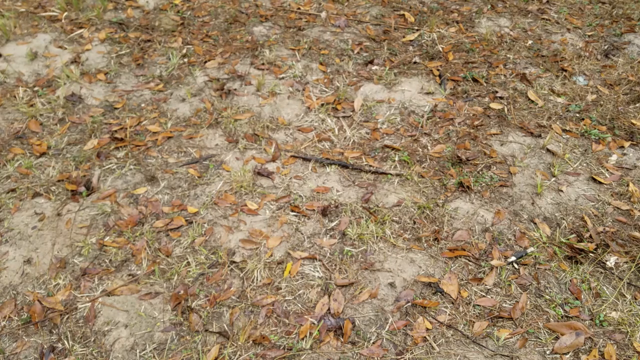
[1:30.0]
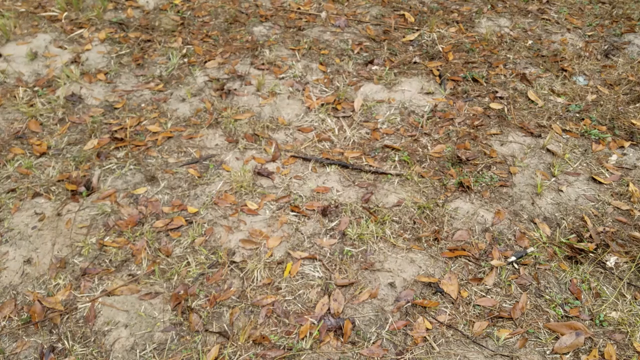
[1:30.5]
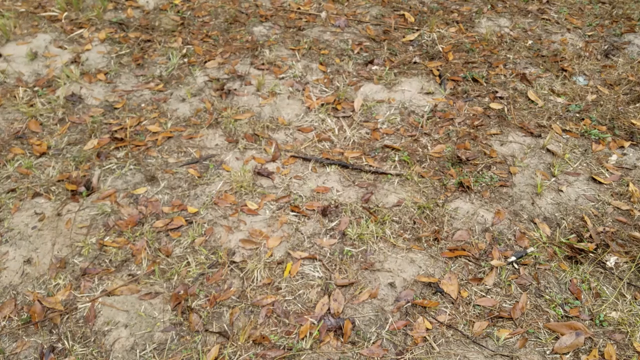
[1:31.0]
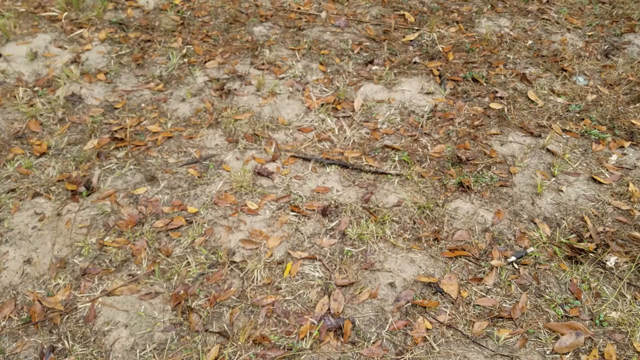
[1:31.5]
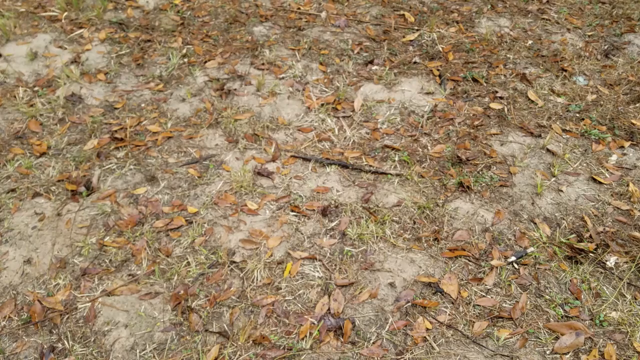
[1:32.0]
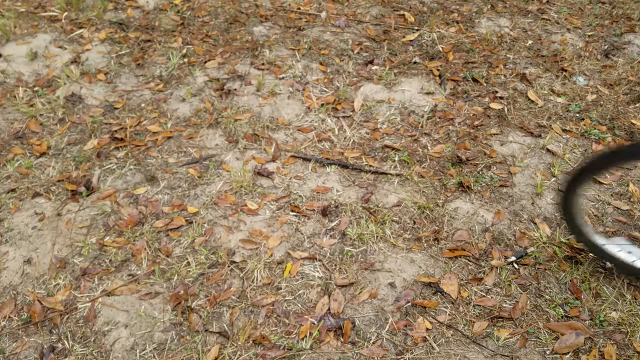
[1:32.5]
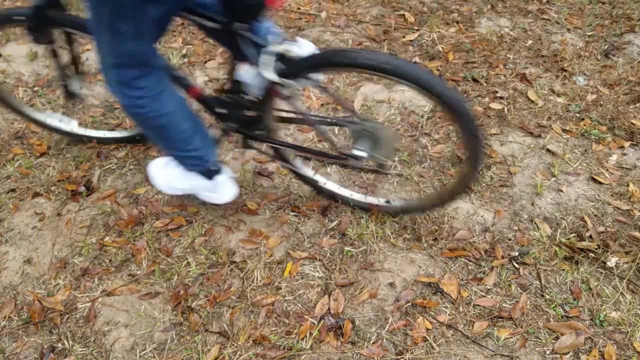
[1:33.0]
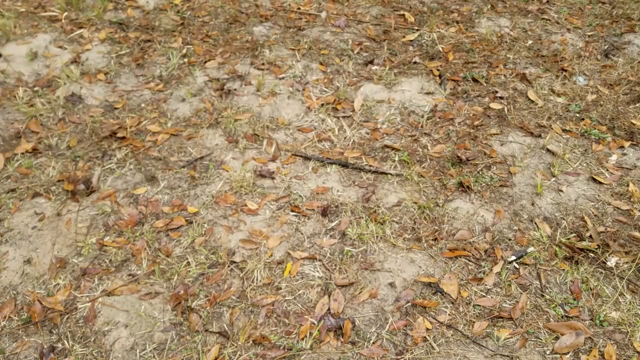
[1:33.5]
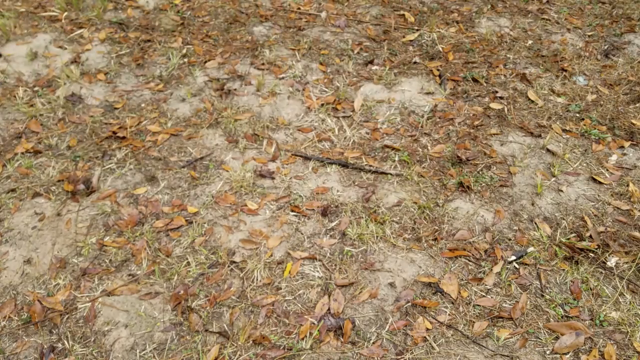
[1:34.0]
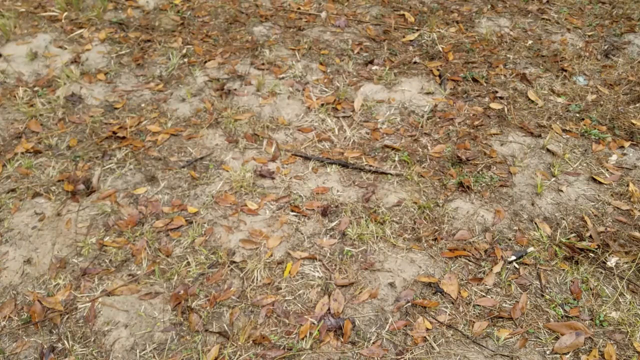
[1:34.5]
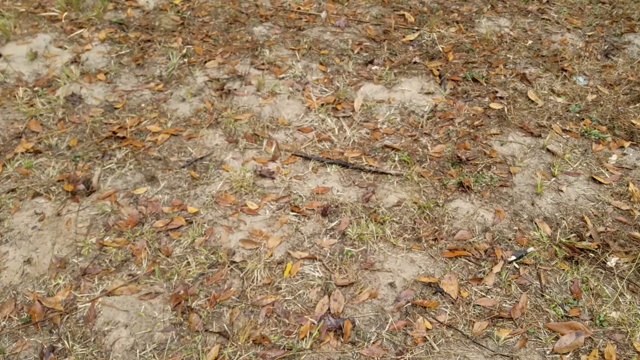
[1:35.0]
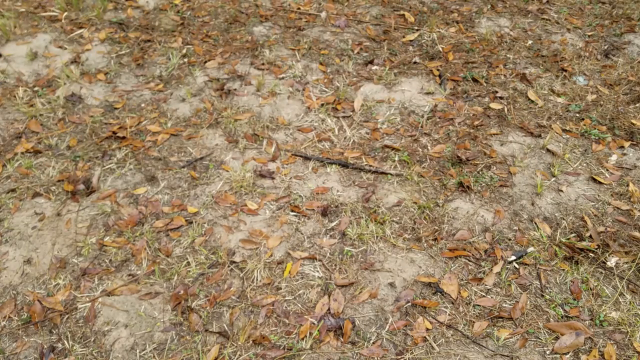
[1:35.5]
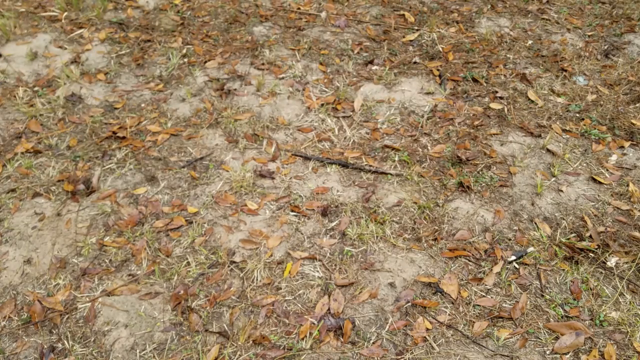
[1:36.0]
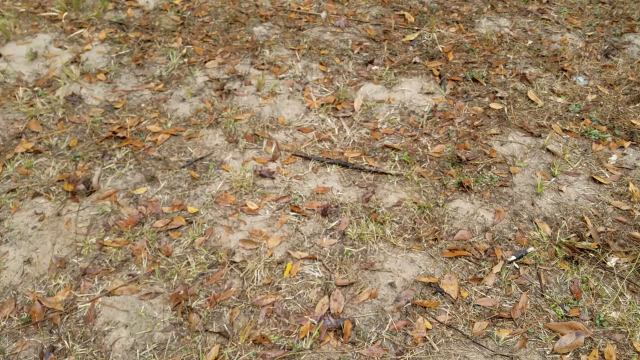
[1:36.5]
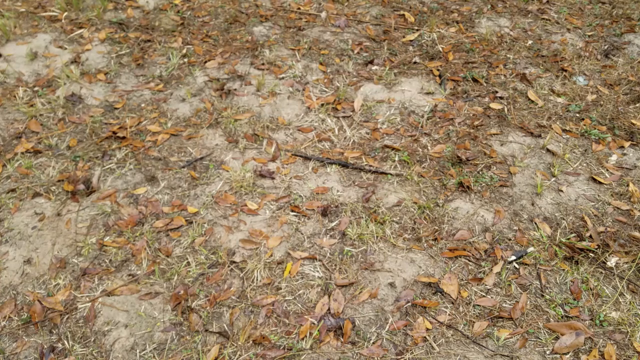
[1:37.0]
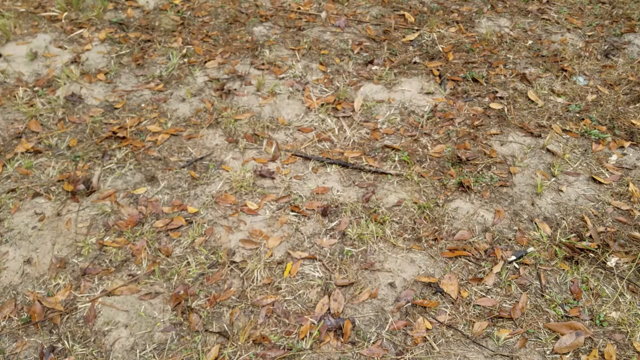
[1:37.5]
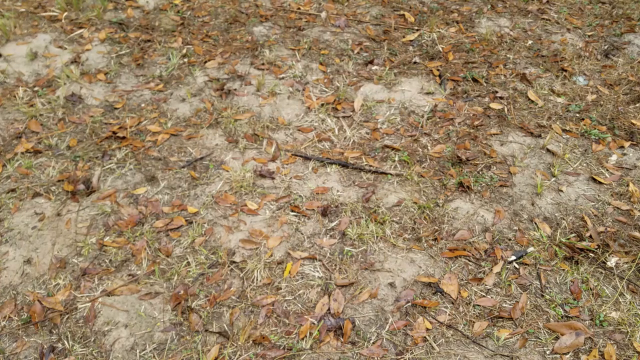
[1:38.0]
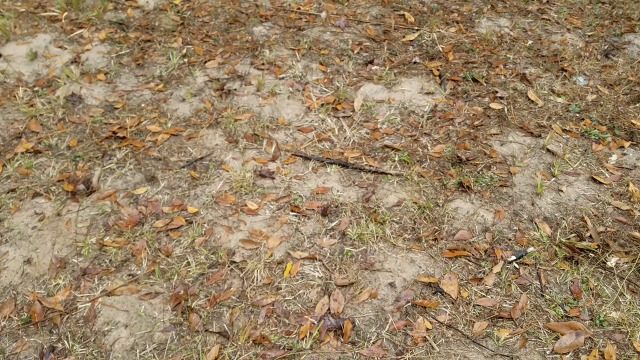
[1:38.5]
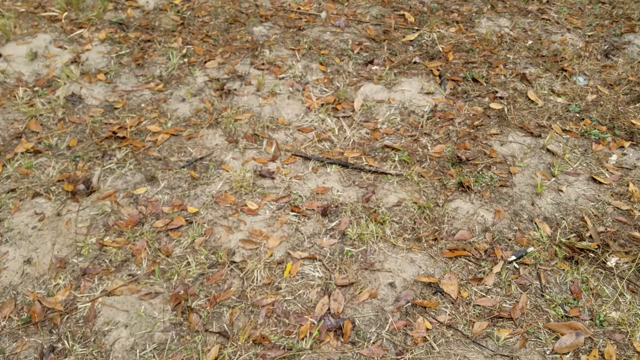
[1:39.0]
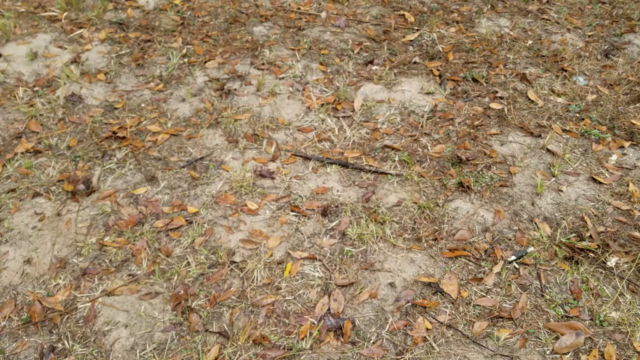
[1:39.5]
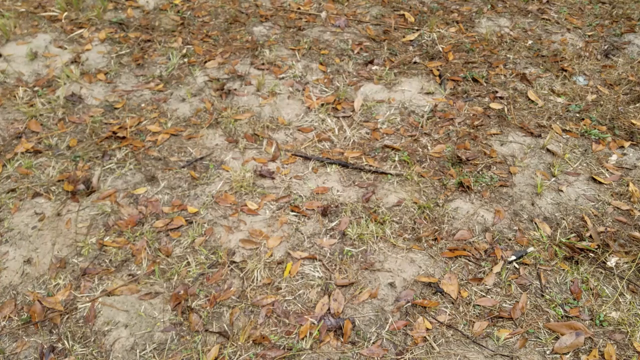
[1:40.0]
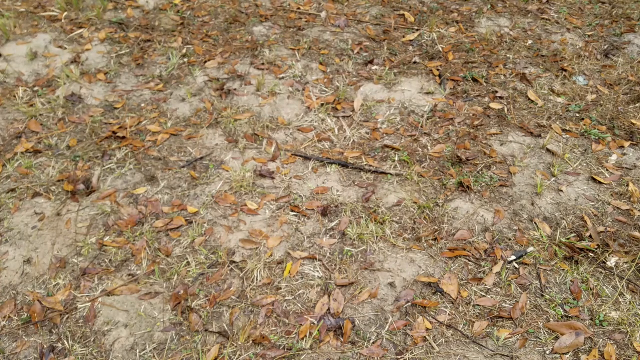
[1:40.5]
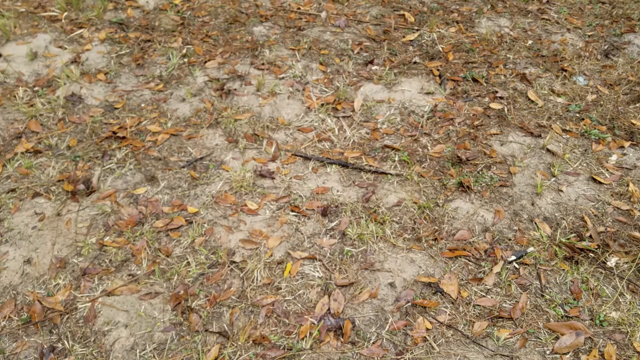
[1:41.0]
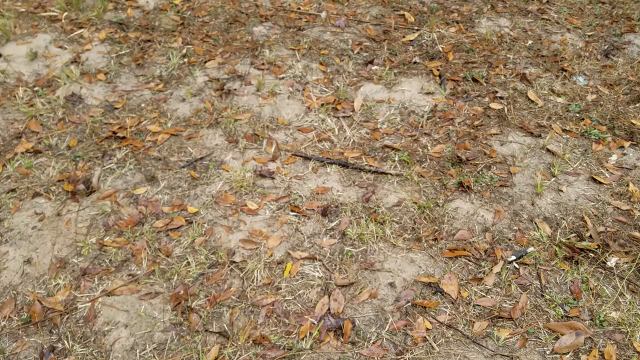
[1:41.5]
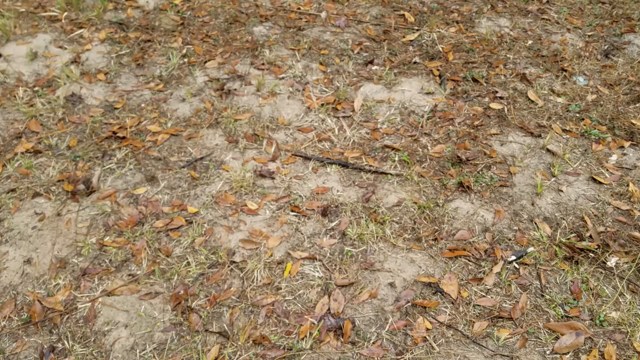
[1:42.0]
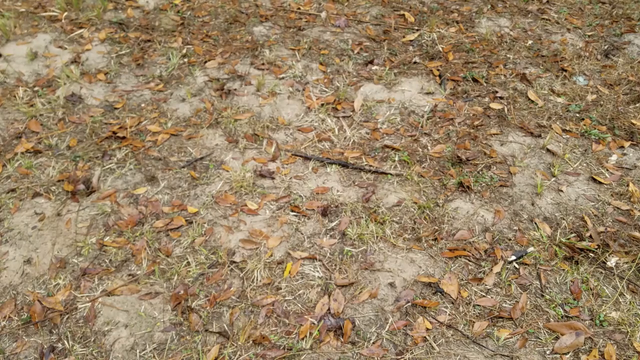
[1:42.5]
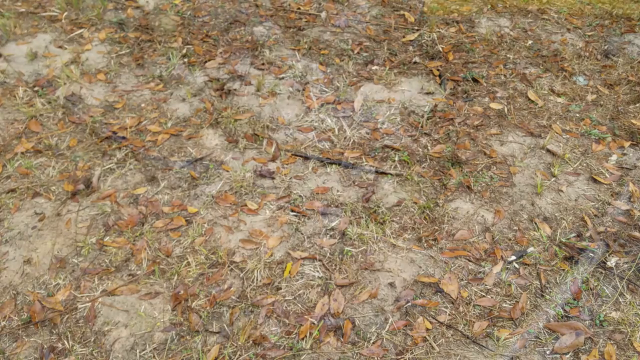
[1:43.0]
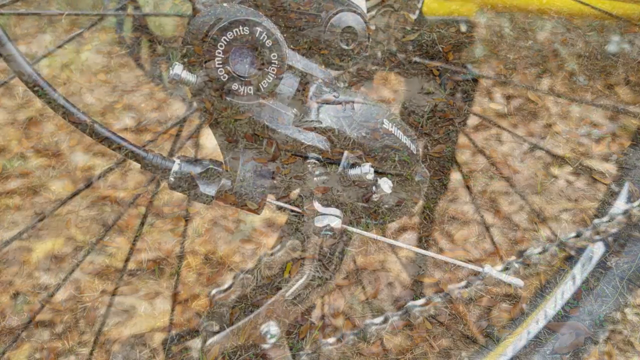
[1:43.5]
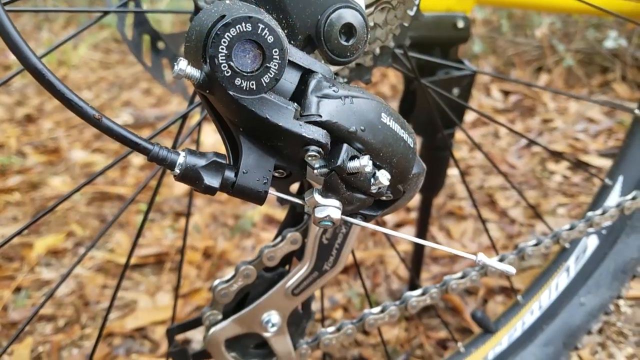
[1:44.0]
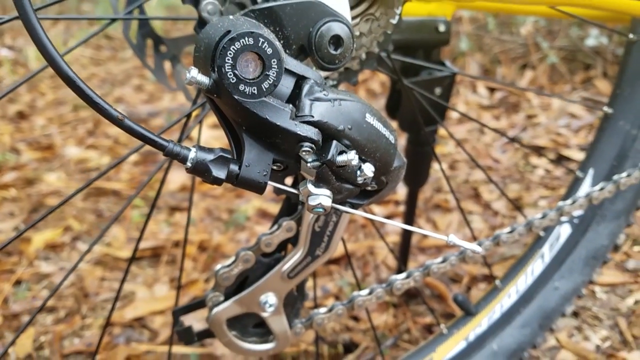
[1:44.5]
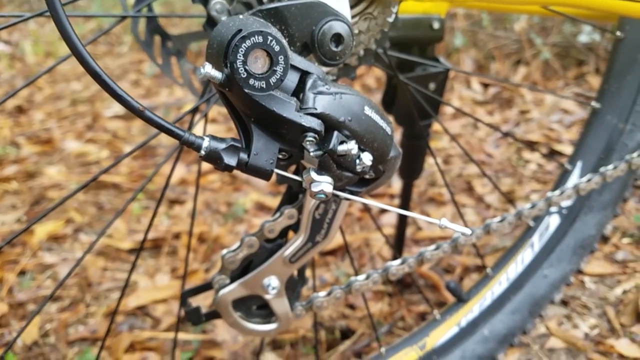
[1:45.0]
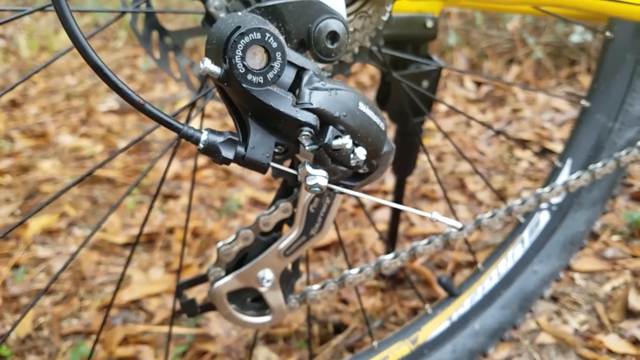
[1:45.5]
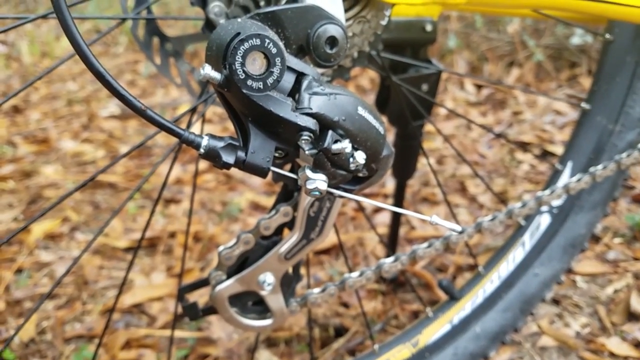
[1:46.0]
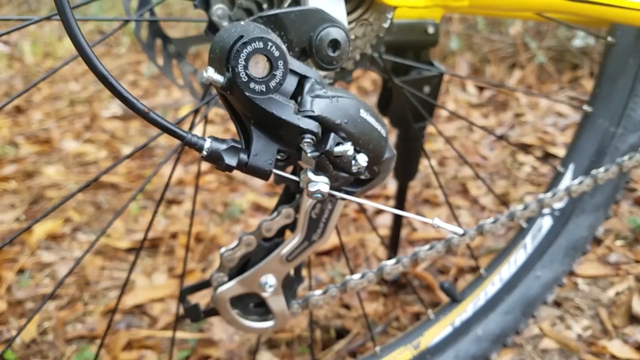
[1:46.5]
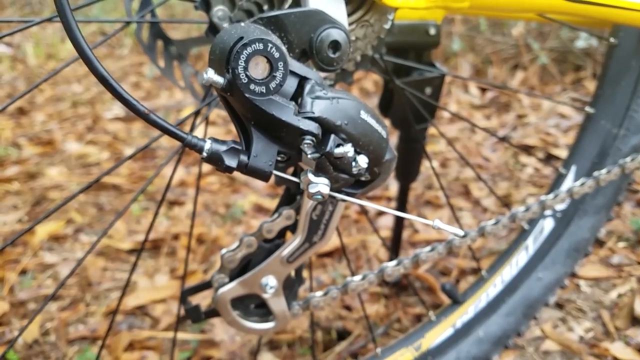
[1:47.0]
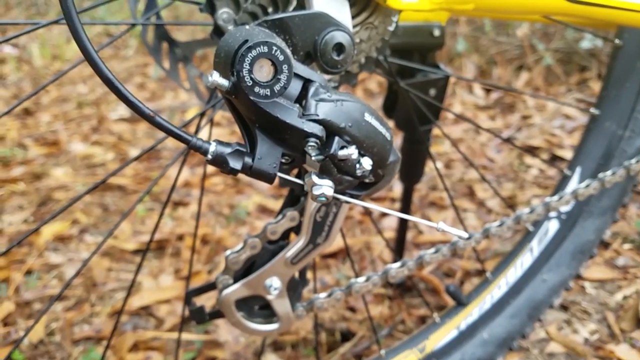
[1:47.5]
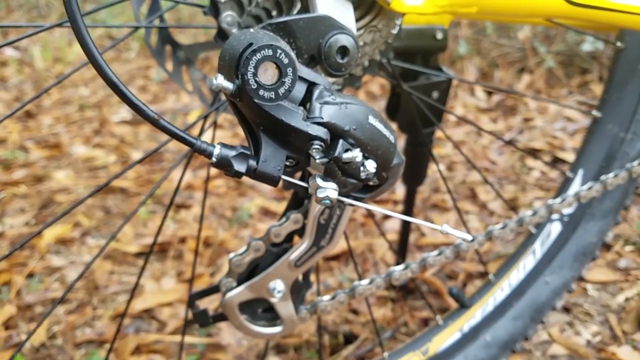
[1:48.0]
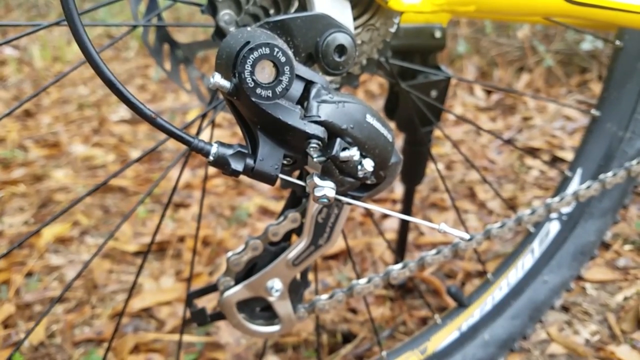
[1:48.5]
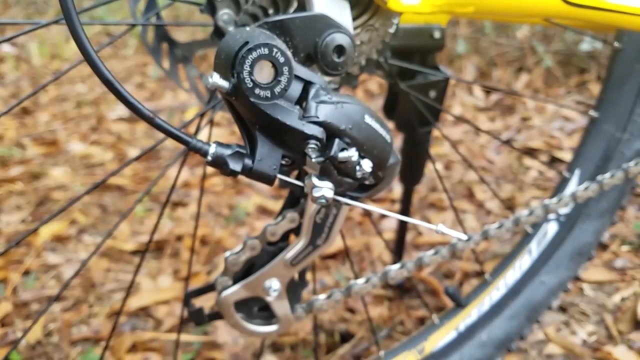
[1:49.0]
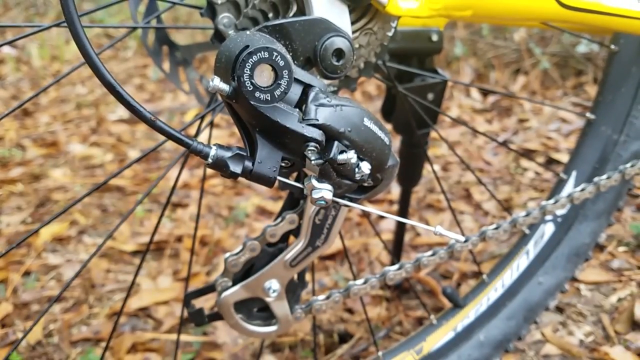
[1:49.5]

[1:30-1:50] Dried-up, brownish dead leaves with some sand in them fill the shot, and the bike goes by over the leaves. Then the sprocket appears with the chain coming out of it. A close-up of the gears on the tire follows, and the chain has not gotten dirty yet.